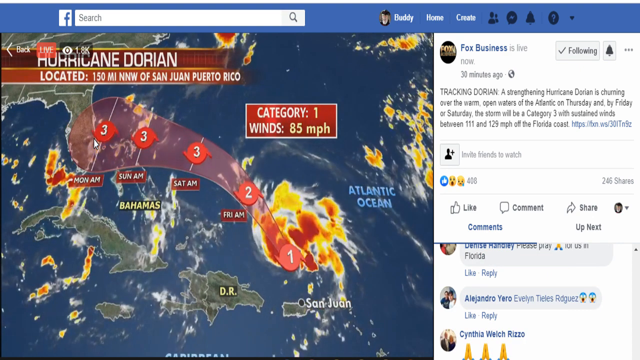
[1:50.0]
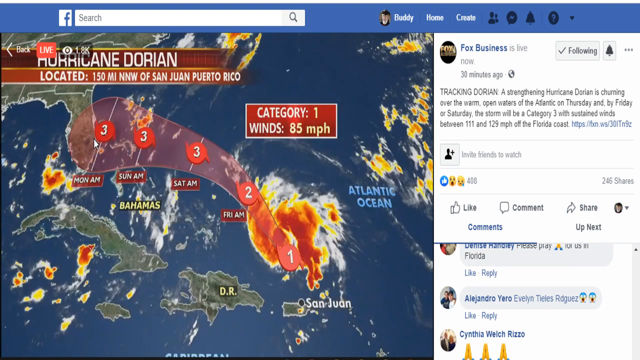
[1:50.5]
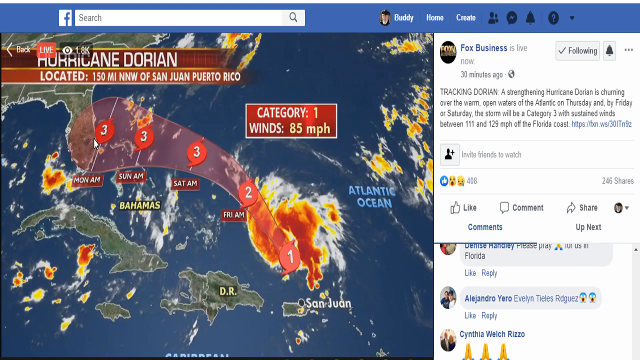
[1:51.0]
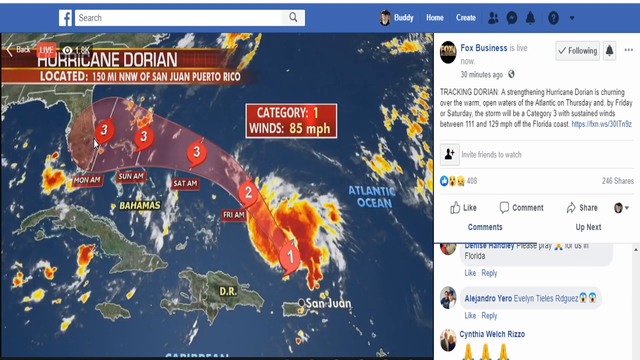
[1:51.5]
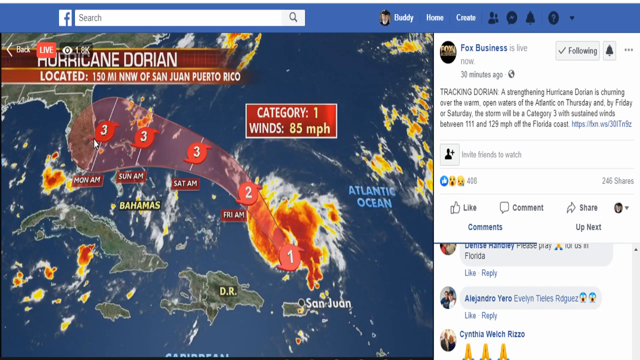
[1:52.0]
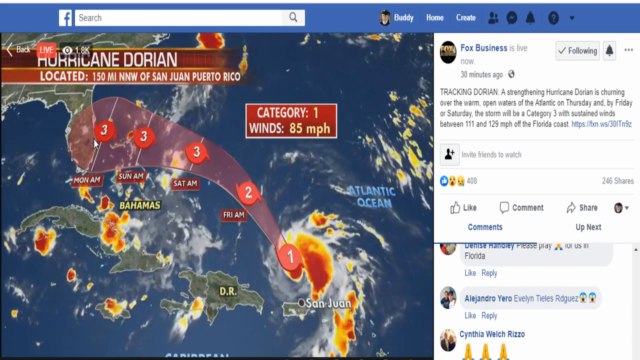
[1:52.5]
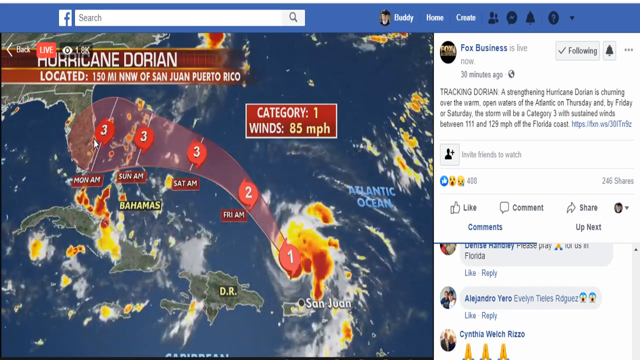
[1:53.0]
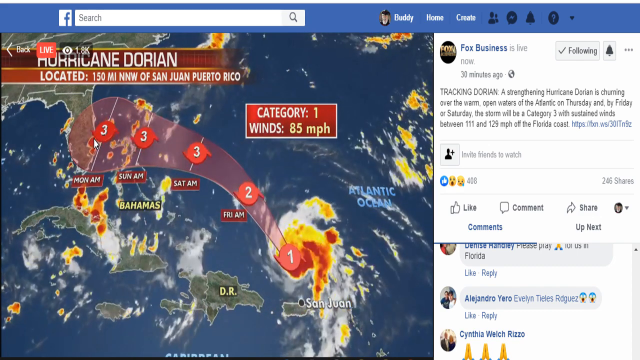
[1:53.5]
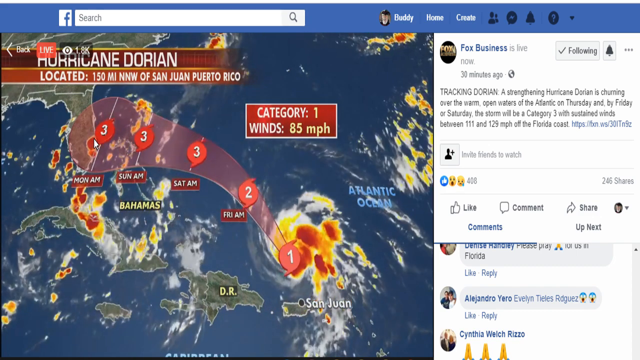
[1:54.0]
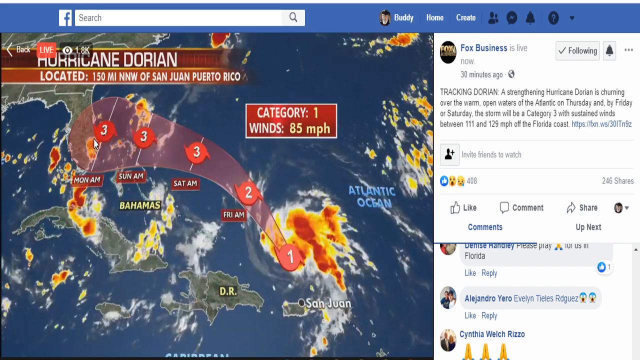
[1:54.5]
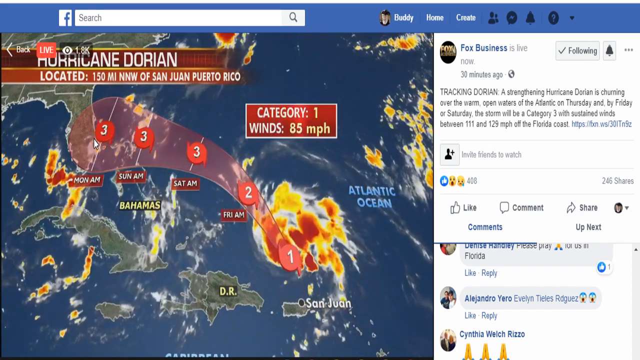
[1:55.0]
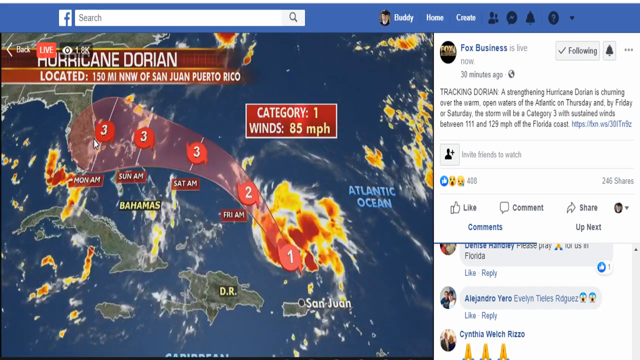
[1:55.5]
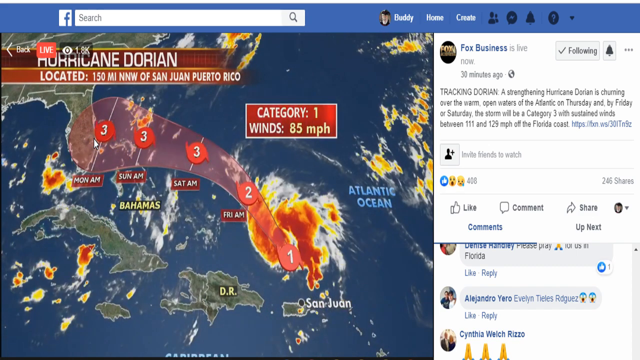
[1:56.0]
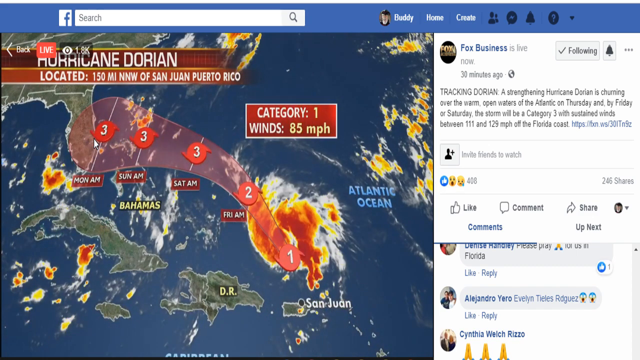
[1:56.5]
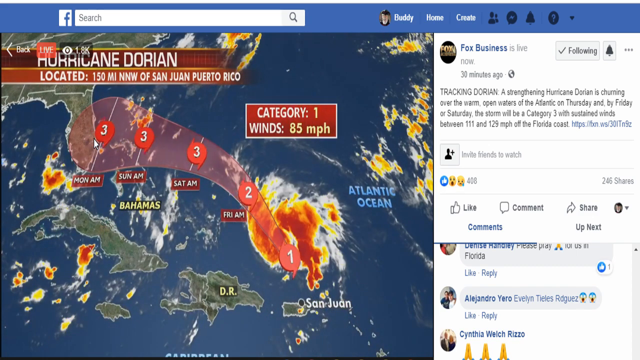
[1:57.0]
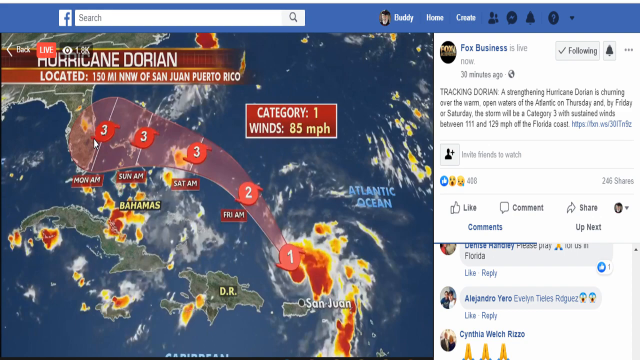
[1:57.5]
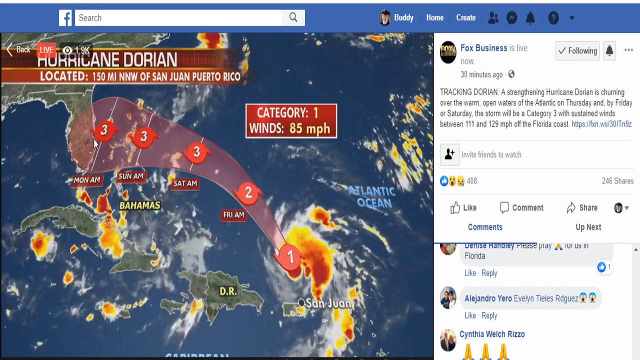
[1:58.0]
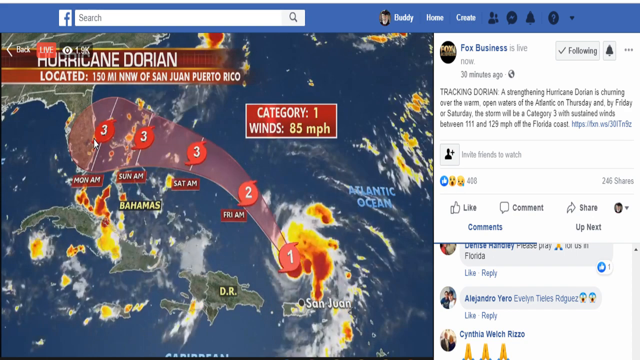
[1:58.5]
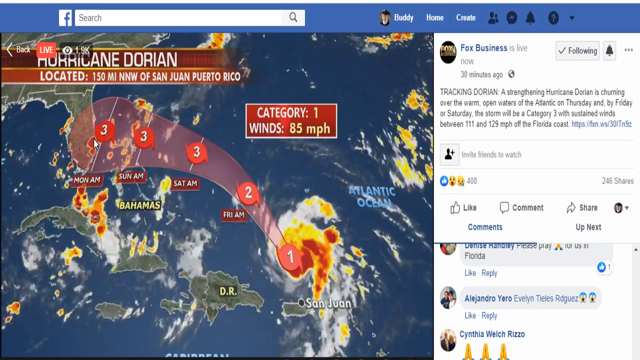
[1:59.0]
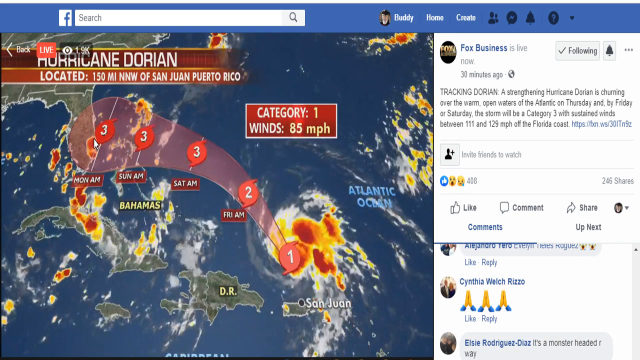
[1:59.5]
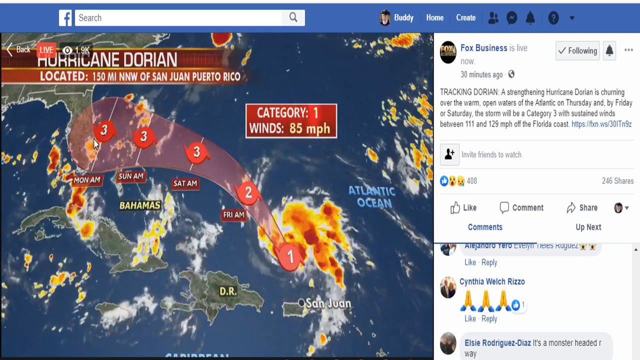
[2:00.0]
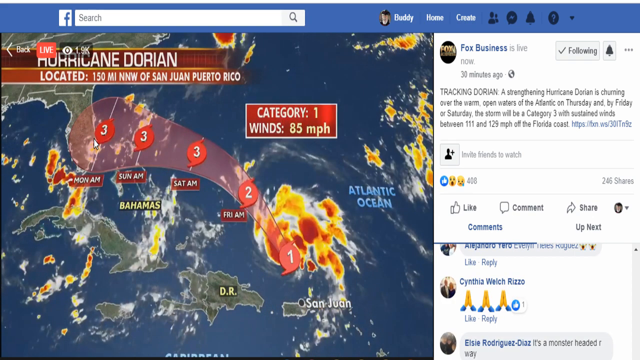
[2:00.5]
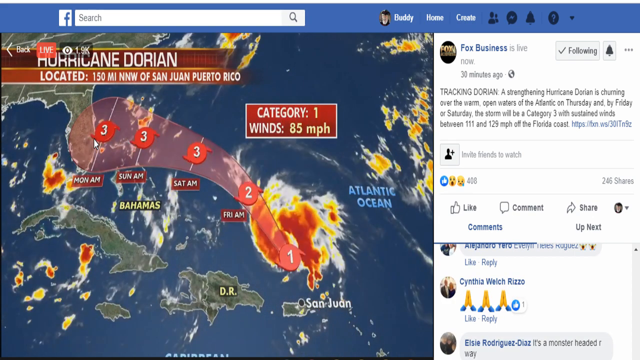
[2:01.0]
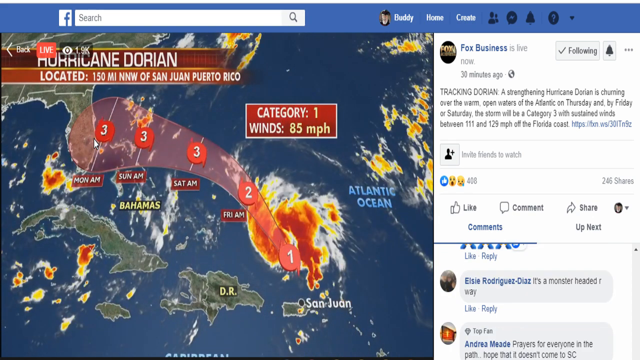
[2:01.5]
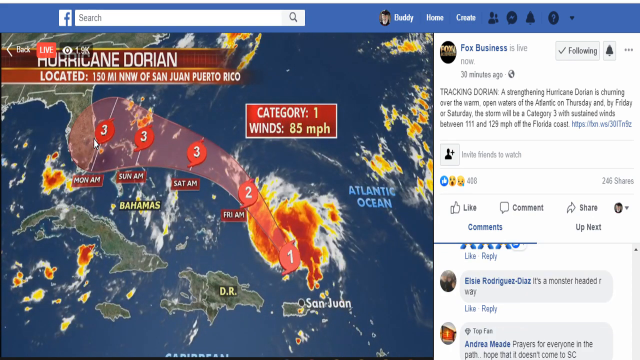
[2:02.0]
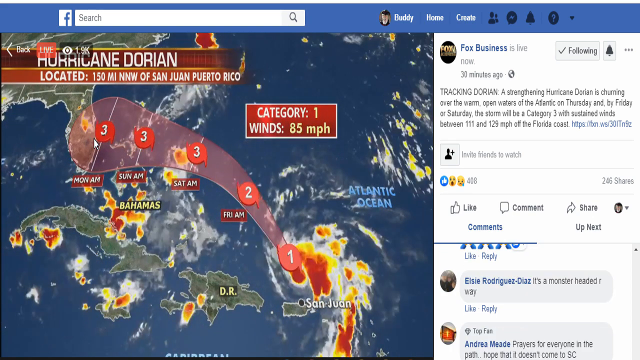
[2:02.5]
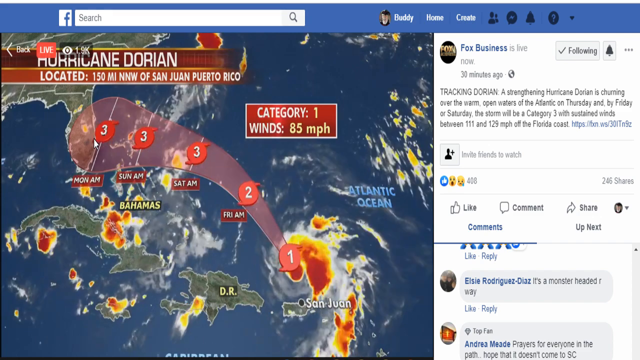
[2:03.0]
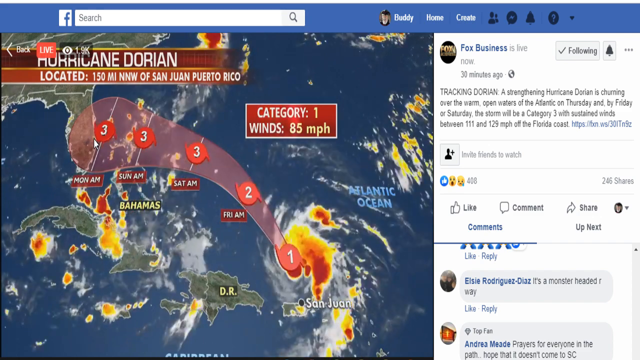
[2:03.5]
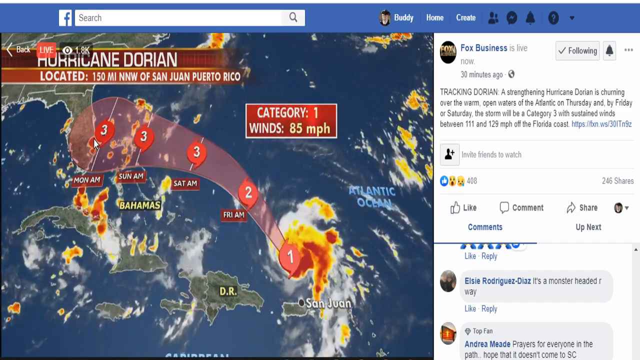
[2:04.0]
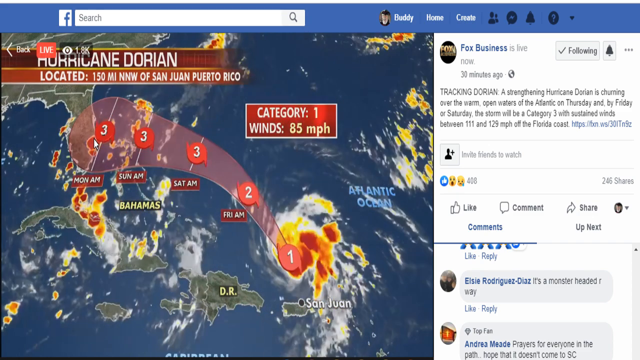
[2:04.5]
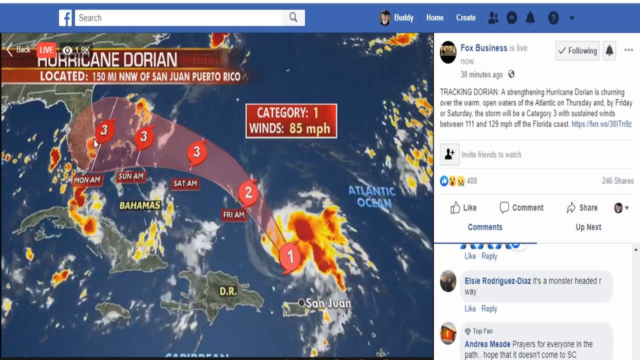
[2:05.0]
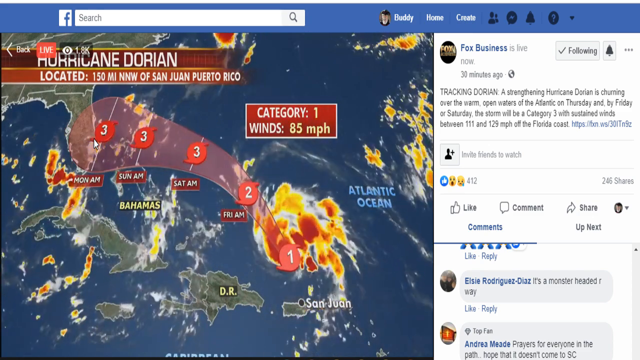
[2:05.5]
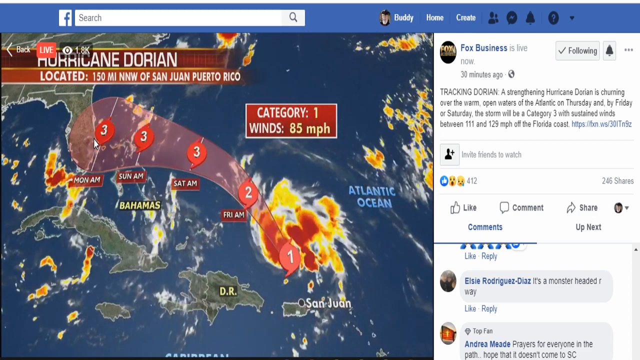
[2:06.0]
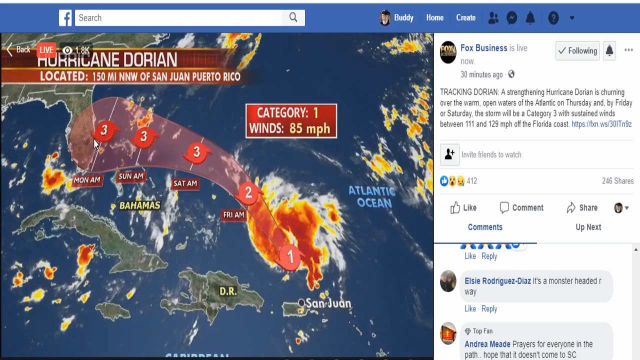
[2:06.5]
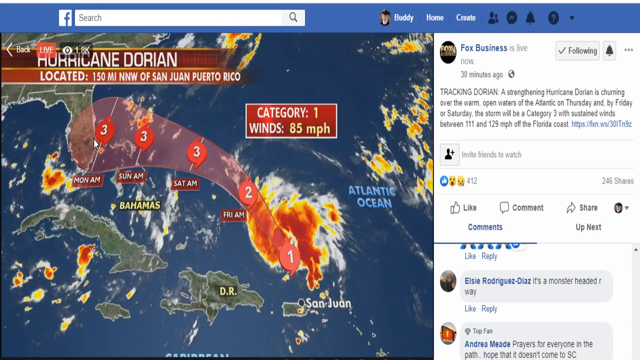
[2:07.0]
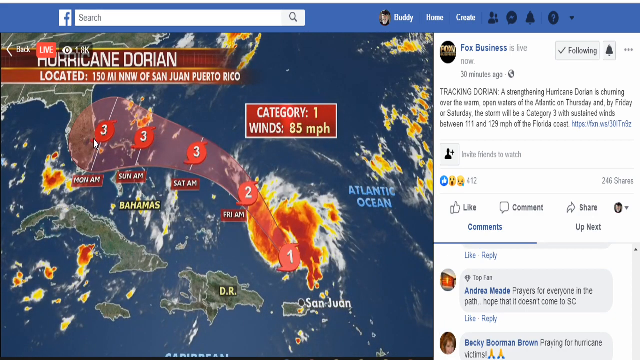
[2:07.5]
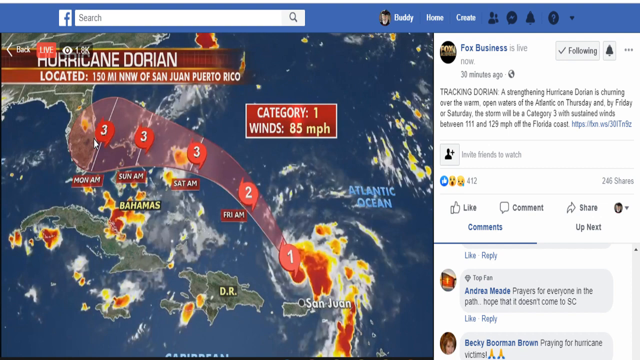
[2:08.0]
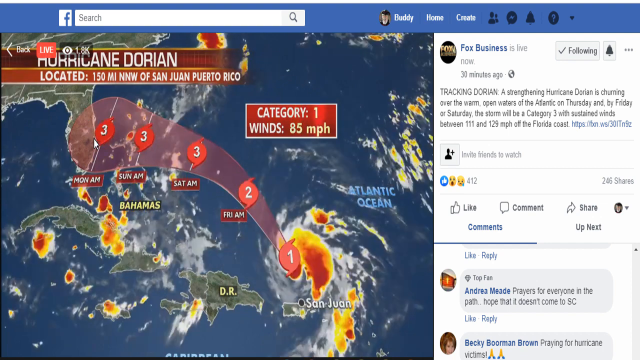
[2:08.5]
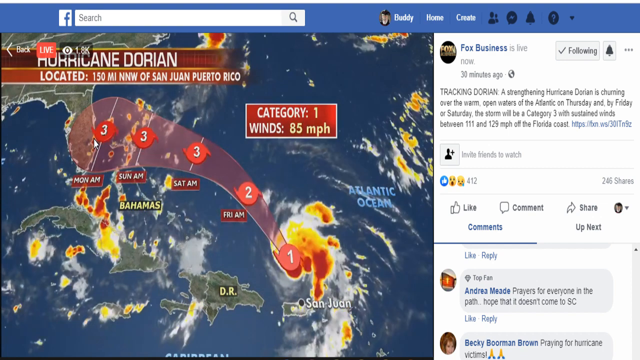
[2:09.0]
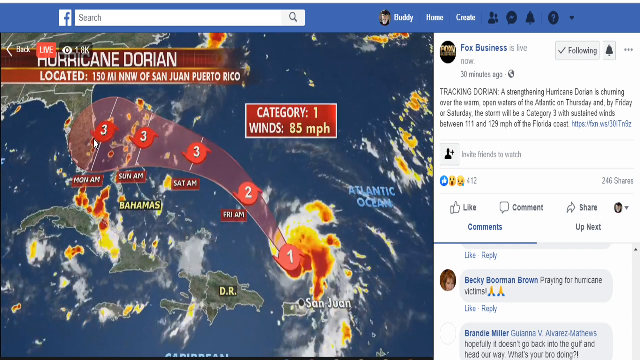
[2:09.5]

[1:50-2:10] The live stream shows the same loop of the hurricane moving from San Juan northwest toward the Friday a.m. section on the red blob. Comments roll in: most people are saying they are praying about the hurricane, some comment with a really surprised emoji, and some tag others. Someone called Alejandro Euro tags friends, with a lot of praying emojis. Another person writes that it's a monster headed our way, using the letter R instead of the word "our". A person called Andrea Meade writes "prayers for everyone in the path. Hope that doesn't come to South Carolina", and above that name is a little top fan icon.